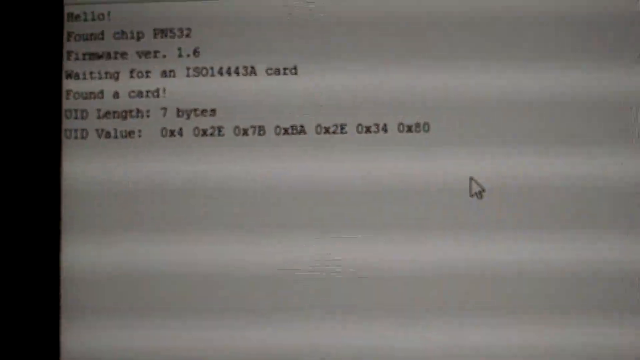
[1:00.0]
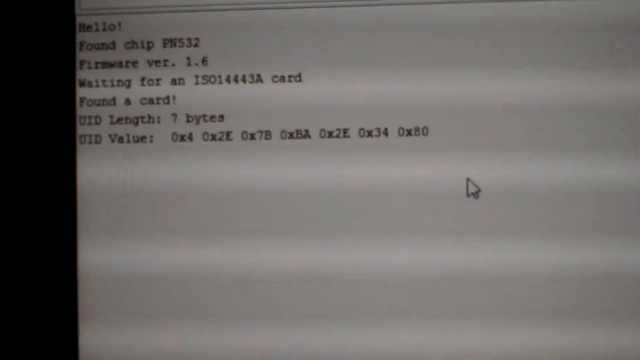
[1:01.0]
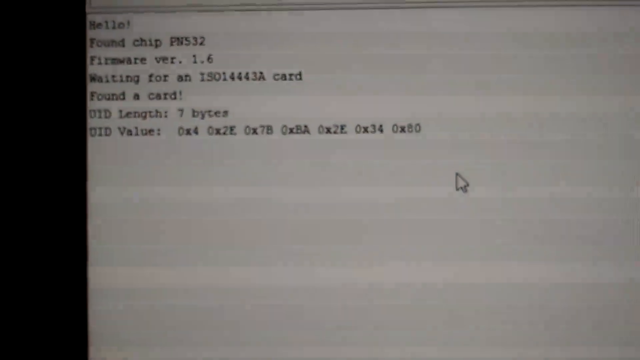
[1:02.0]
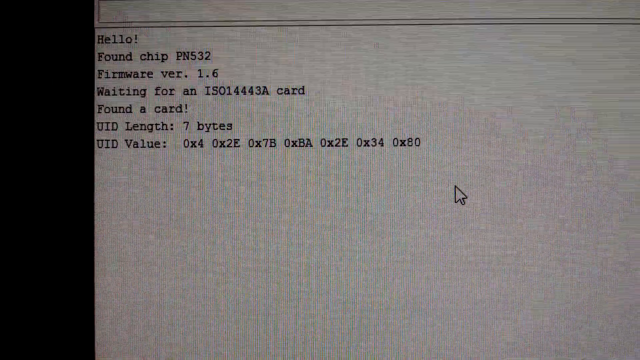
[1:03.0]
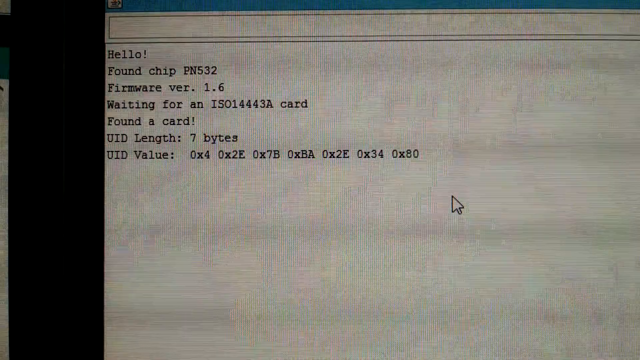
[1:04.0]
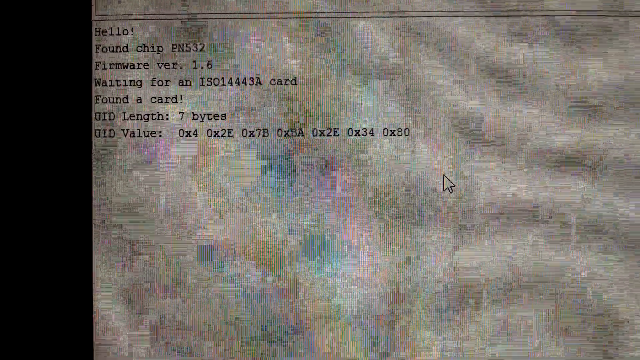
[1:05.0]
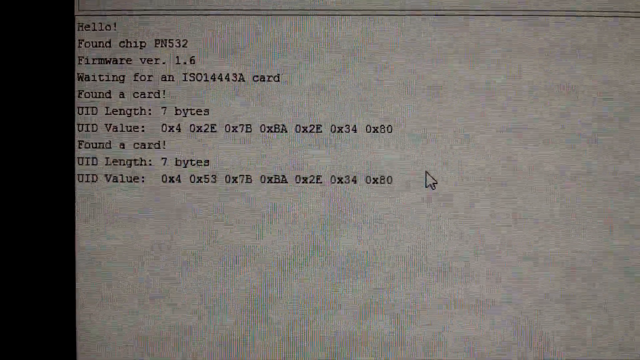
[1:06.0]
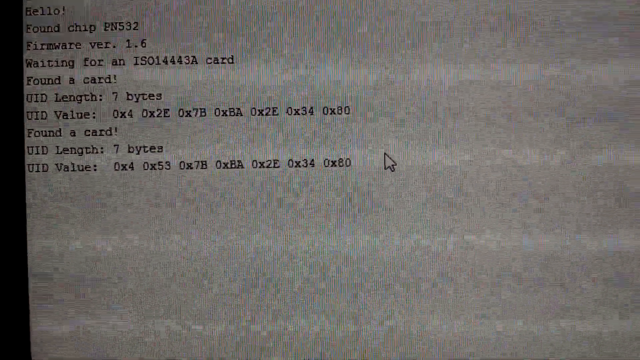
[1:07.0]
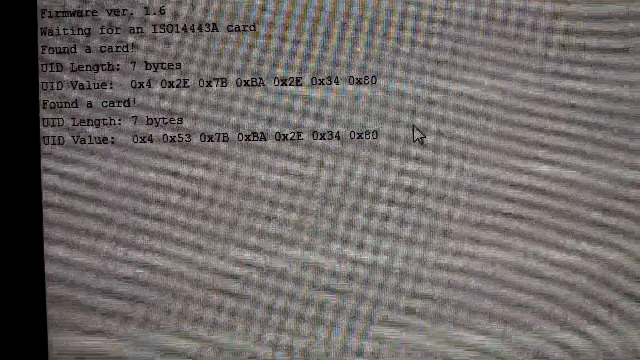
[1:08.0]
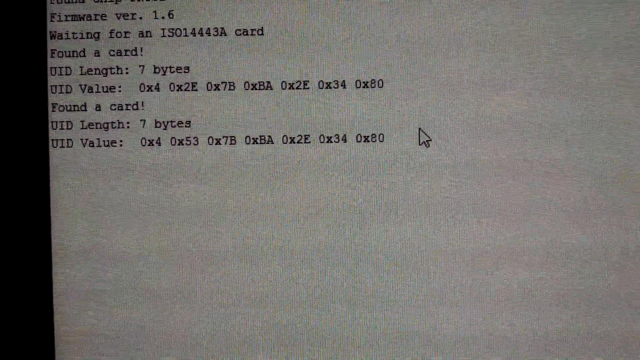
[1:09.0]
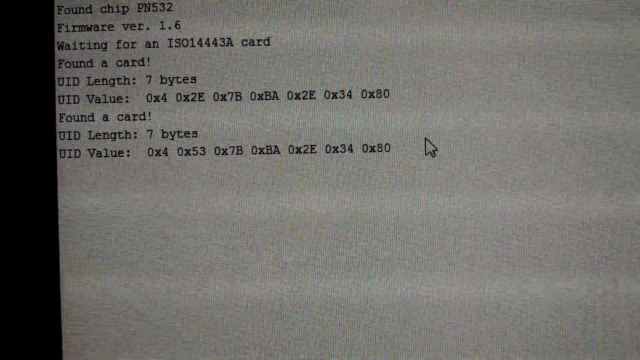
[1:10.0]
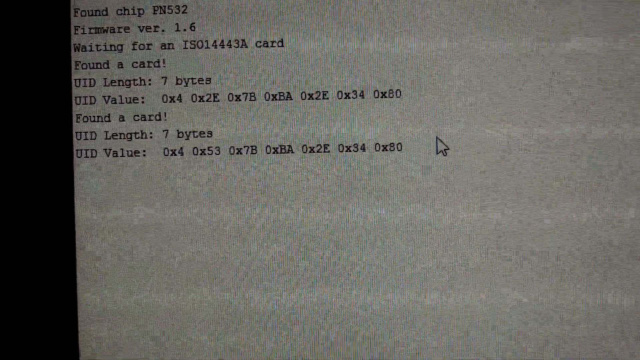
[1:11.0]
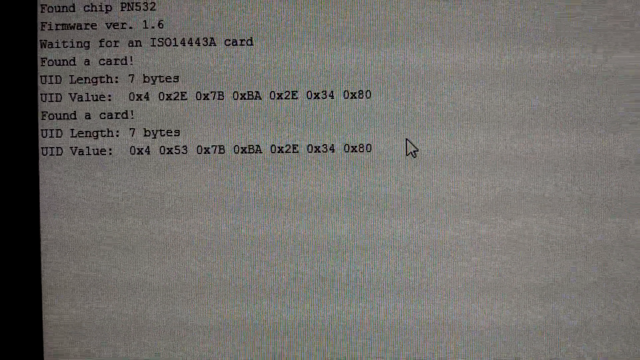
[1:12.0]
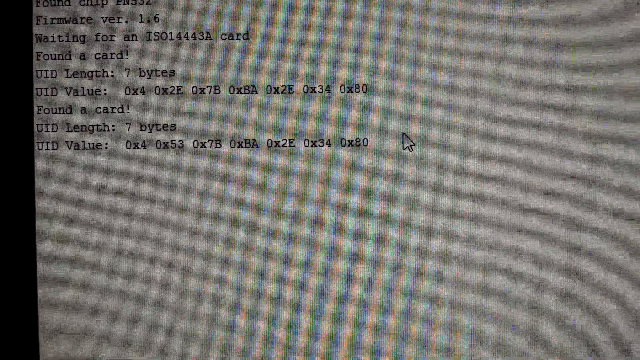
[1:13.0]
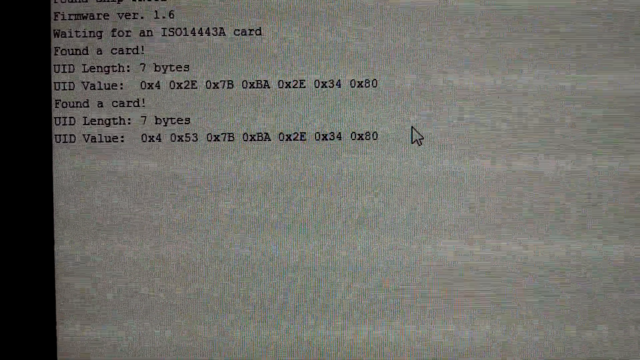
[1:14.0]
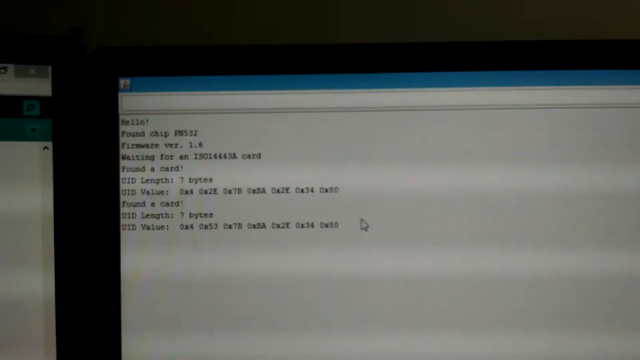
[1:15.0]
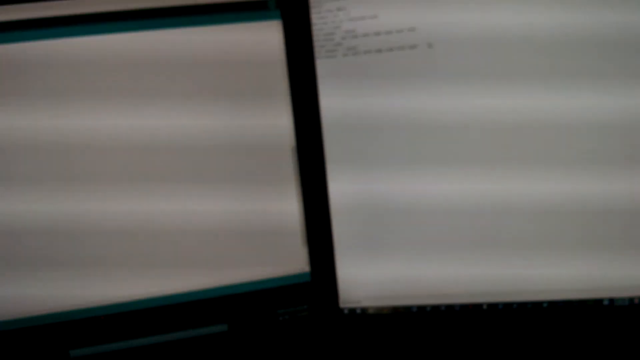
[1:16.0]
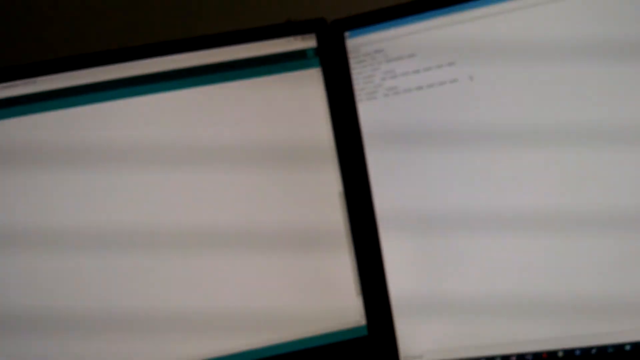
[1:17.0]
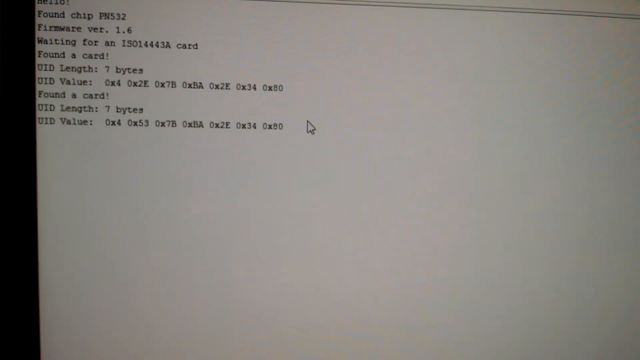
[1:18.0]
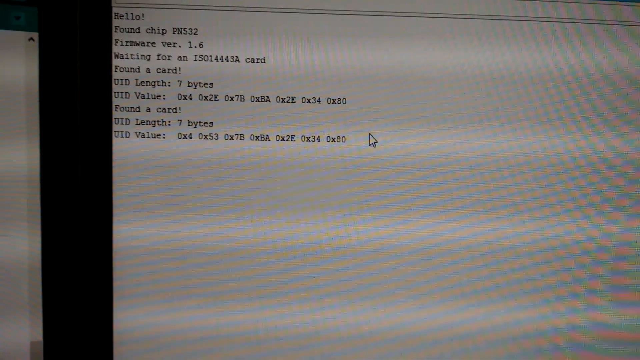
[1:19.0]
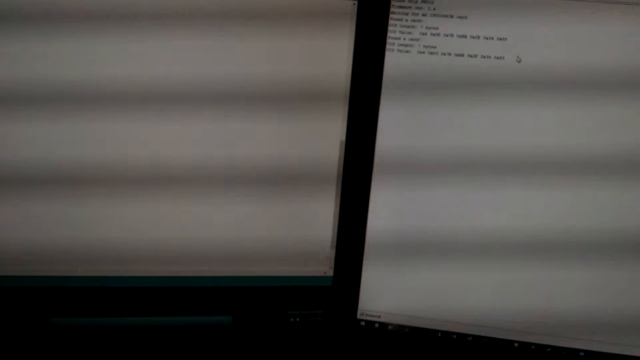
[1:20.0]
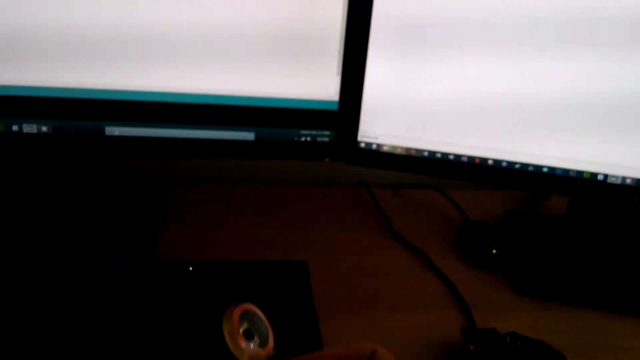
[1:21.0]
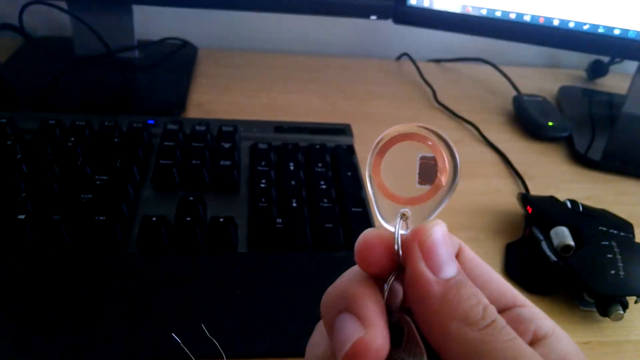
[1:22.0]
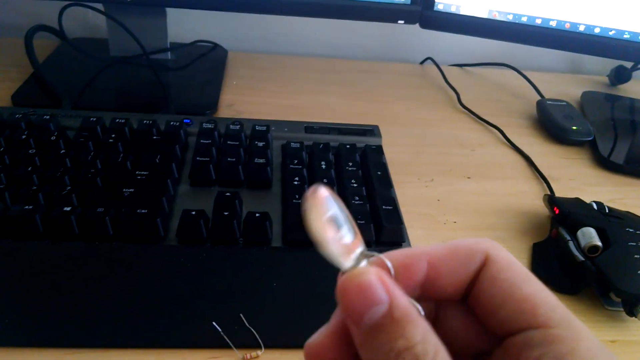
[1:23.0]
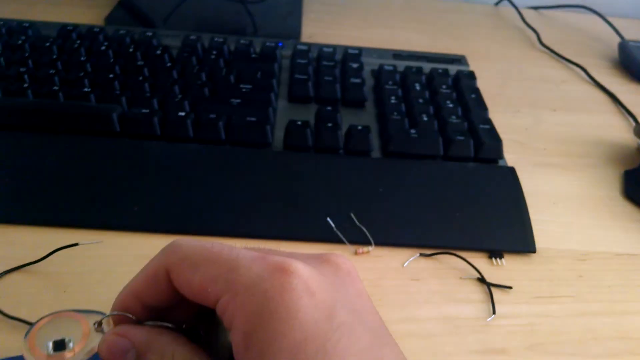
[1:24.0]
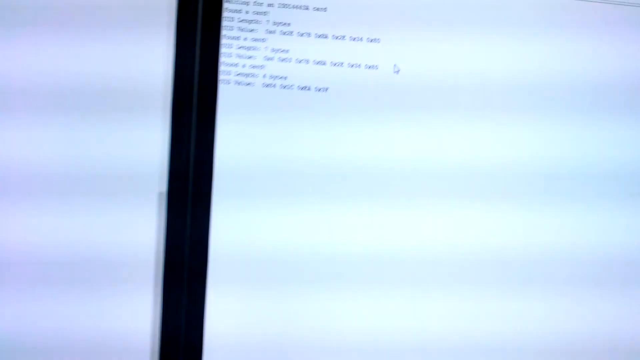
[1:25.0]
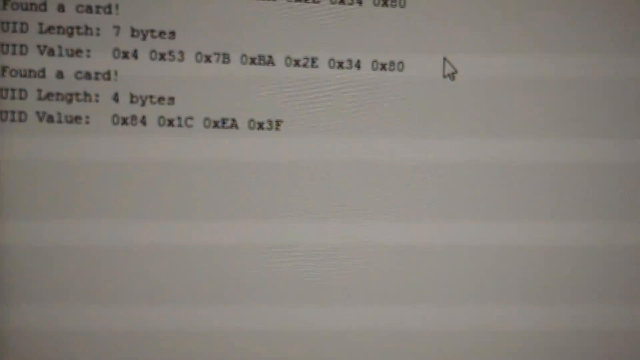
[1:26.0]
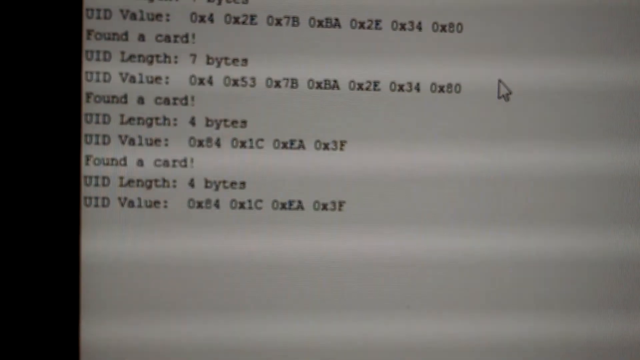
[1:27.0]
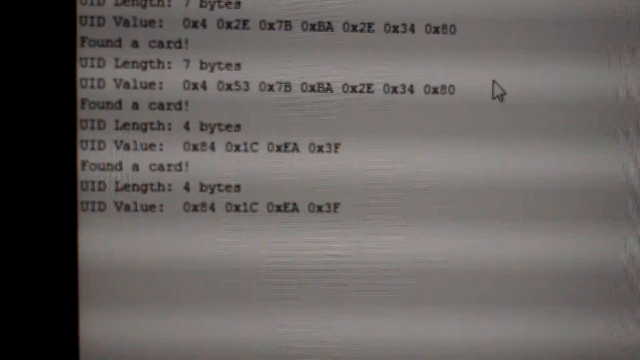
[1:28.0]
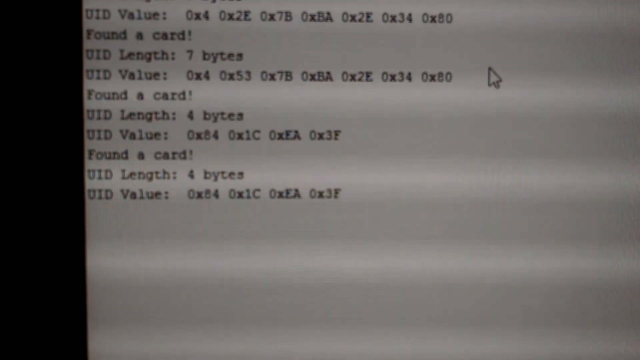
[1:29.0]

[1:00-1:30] The camera points at the computer, this time focusing well enough that the individual letters are much easier to read. Apparently something has been scanned: after the earlier lines, the screen now reads "found a card uid length 7 bytes, uid value 0x4, 0x2e, 0x7b, 0xba, 0x2e, 0x34, and 0x80". Then "found a card" appears again with nearly the same values, except the second value is 0x53 instead of 0x2e. Afterward the person picks up the keys again, and more information appears, this time showing only four values instead of seven.